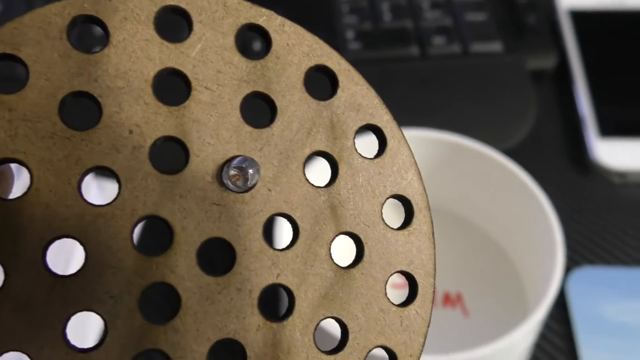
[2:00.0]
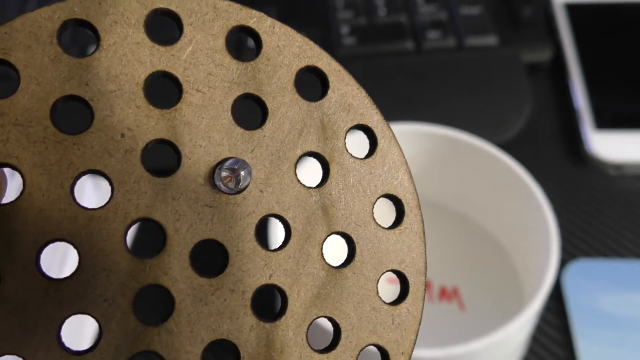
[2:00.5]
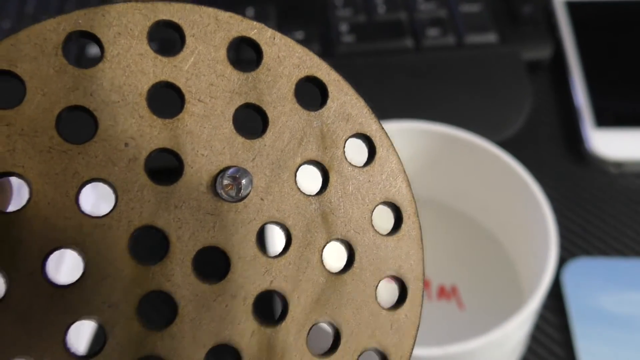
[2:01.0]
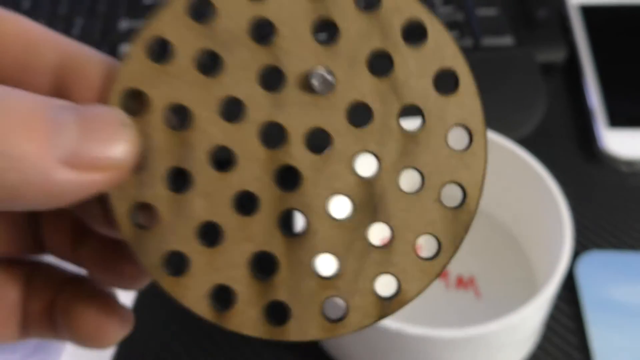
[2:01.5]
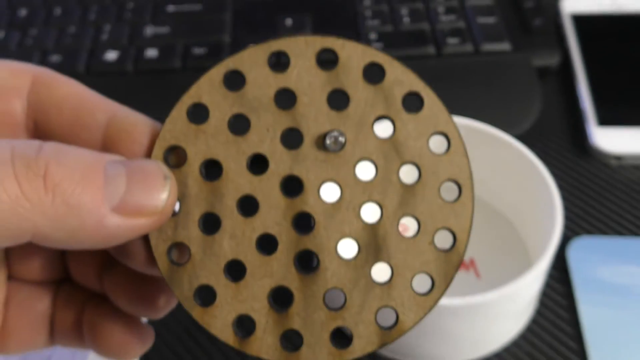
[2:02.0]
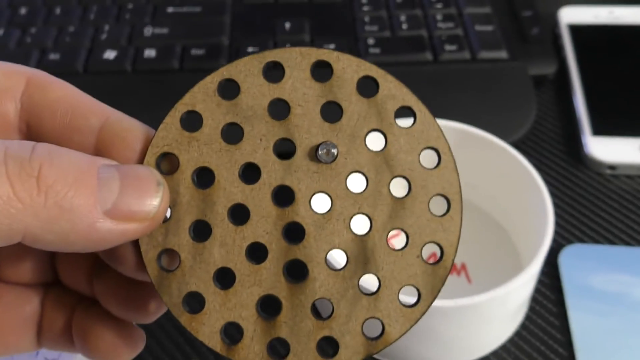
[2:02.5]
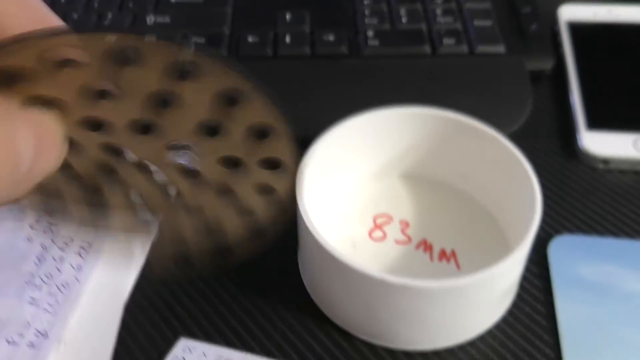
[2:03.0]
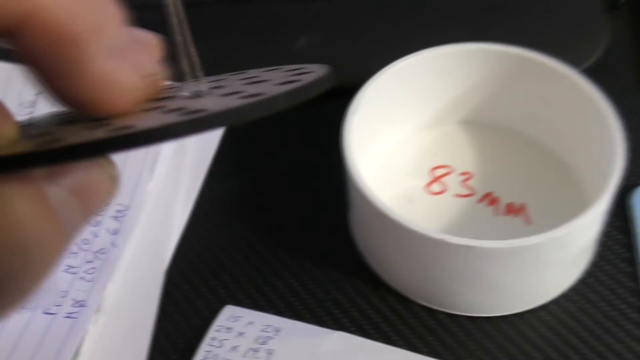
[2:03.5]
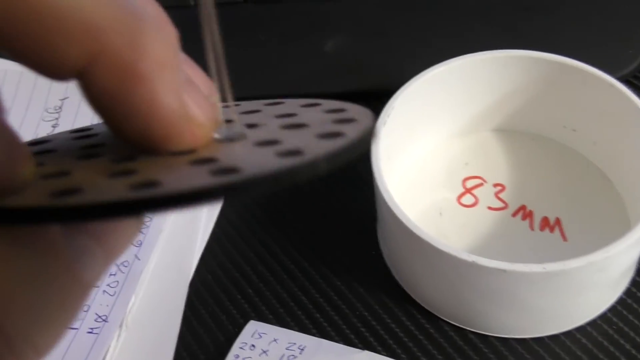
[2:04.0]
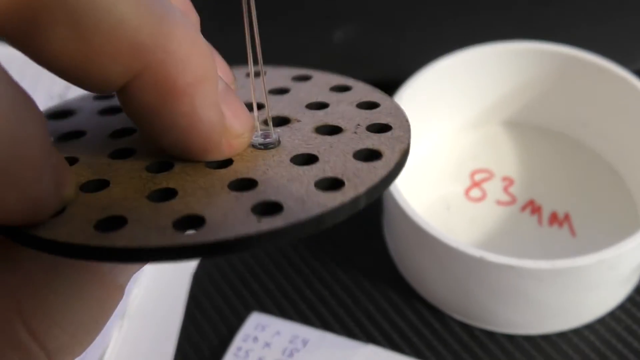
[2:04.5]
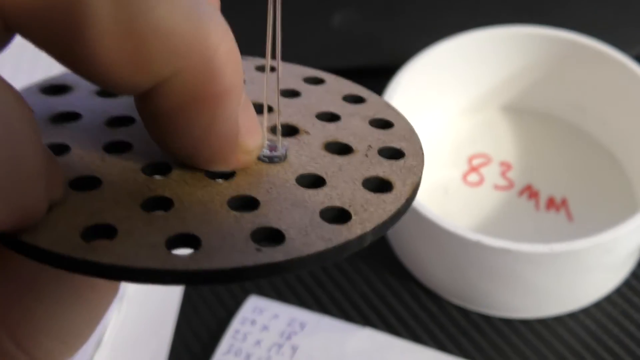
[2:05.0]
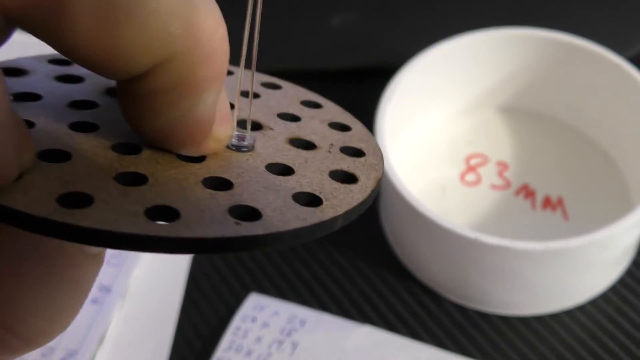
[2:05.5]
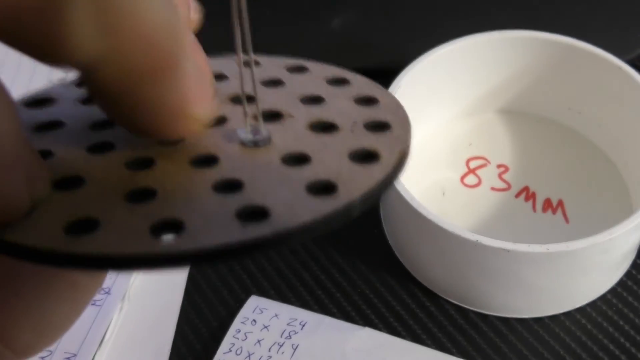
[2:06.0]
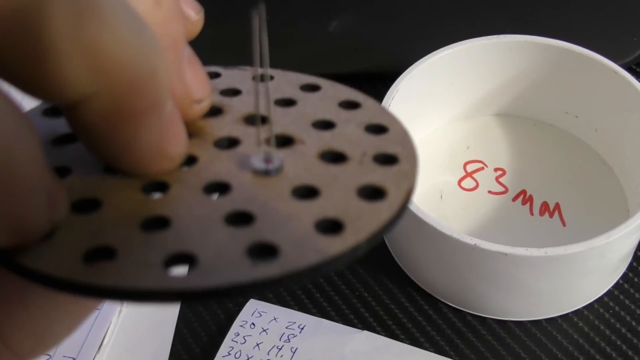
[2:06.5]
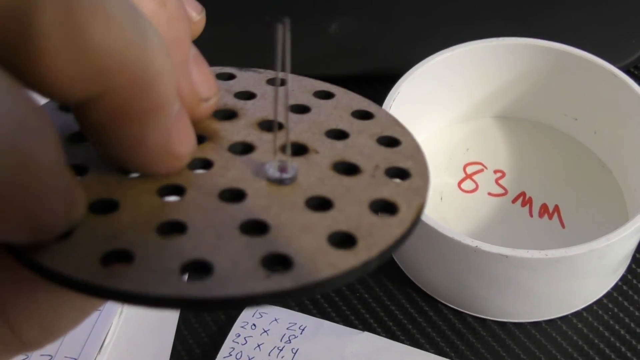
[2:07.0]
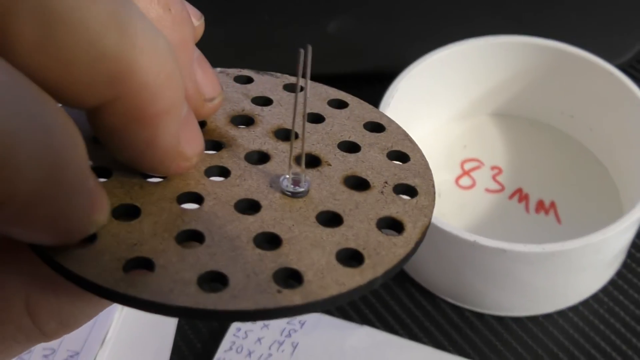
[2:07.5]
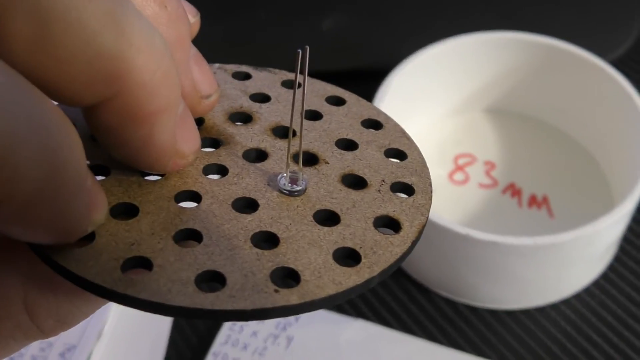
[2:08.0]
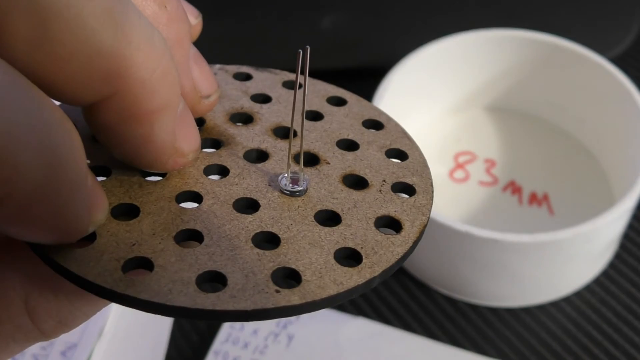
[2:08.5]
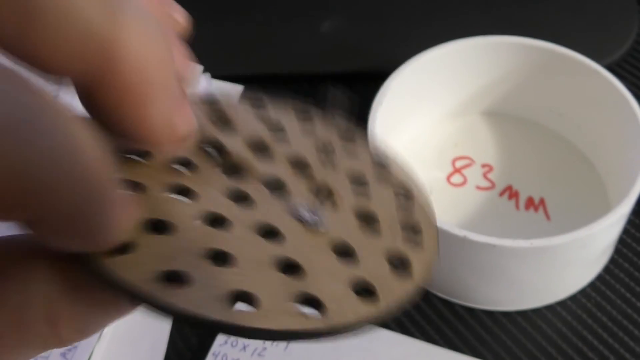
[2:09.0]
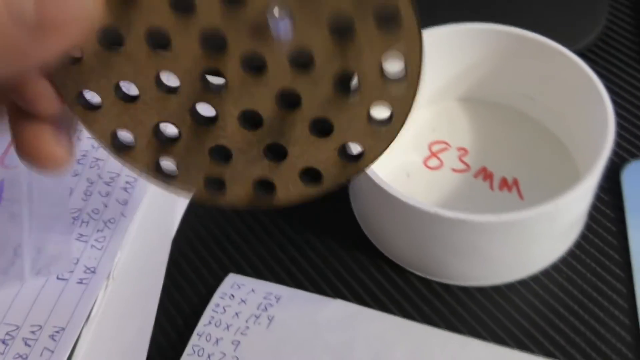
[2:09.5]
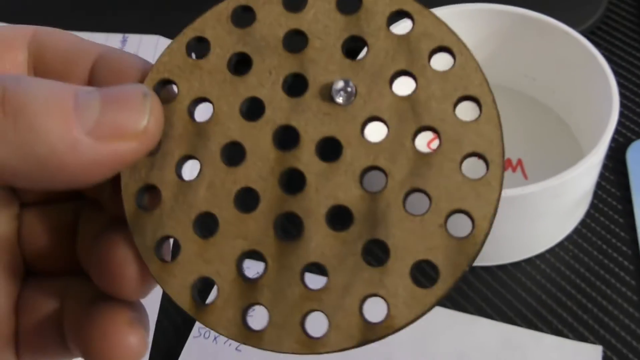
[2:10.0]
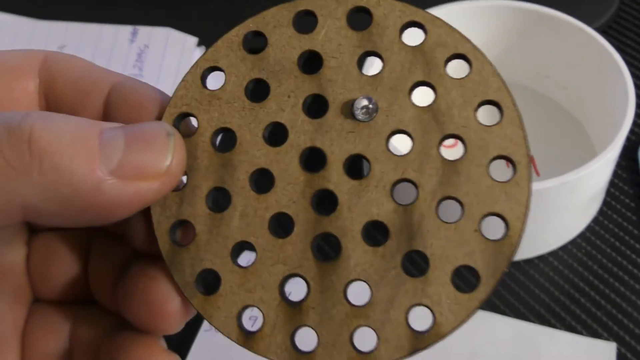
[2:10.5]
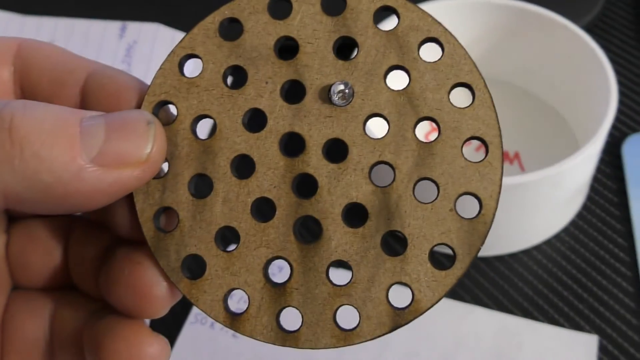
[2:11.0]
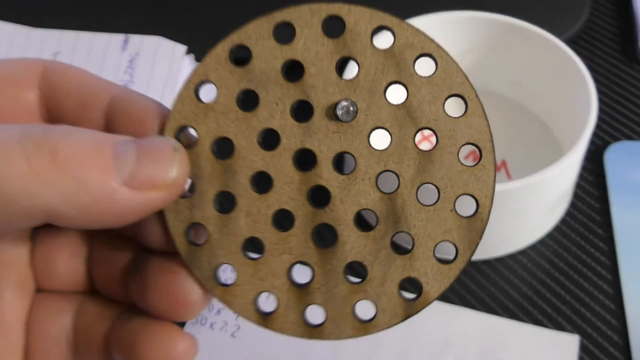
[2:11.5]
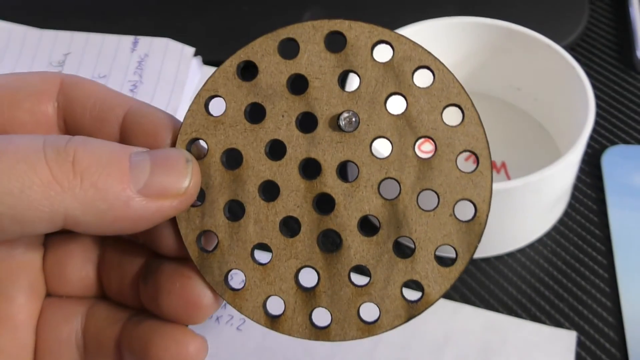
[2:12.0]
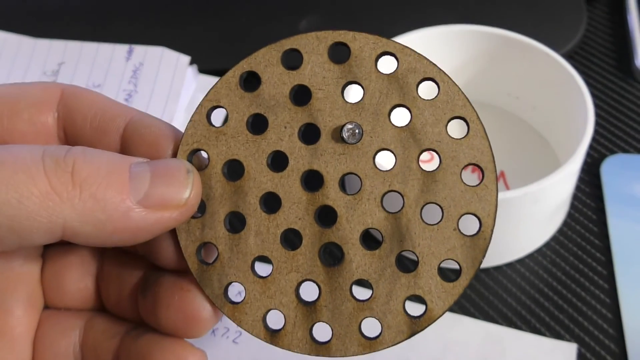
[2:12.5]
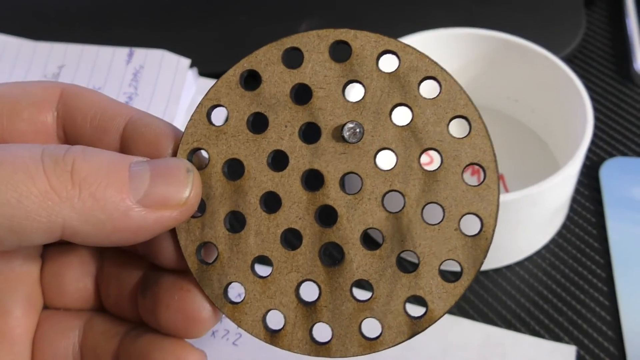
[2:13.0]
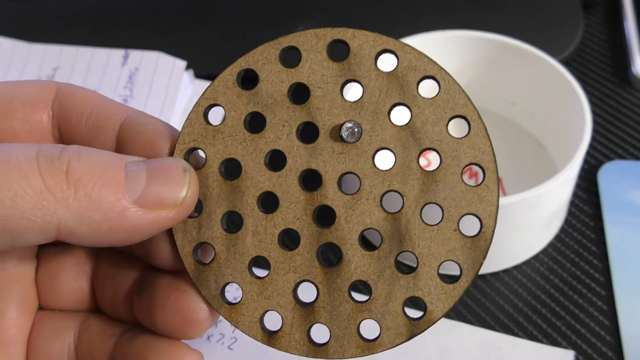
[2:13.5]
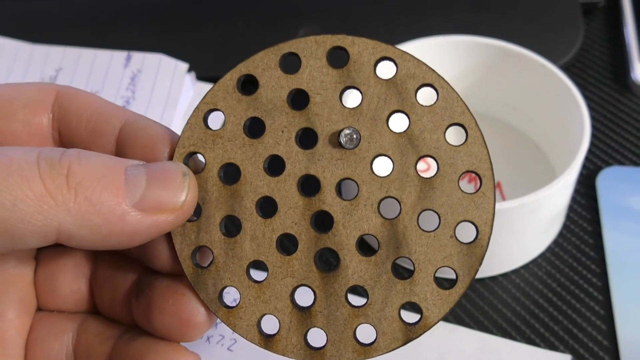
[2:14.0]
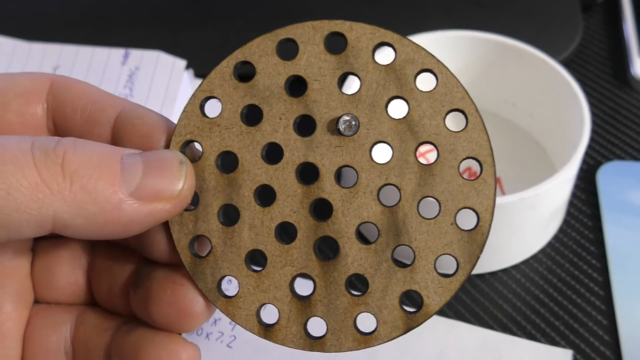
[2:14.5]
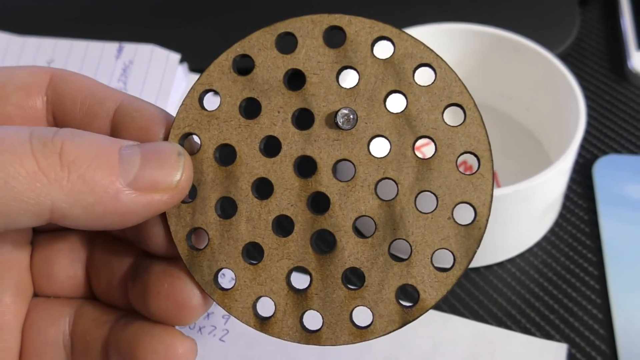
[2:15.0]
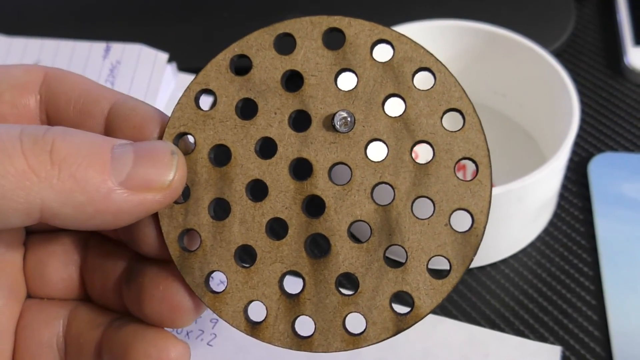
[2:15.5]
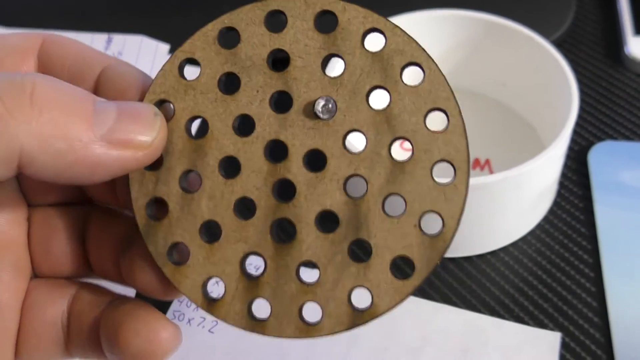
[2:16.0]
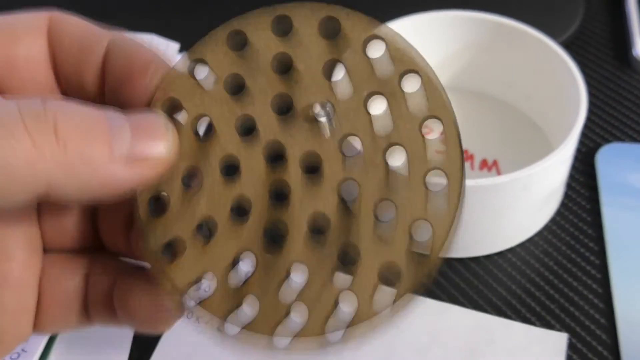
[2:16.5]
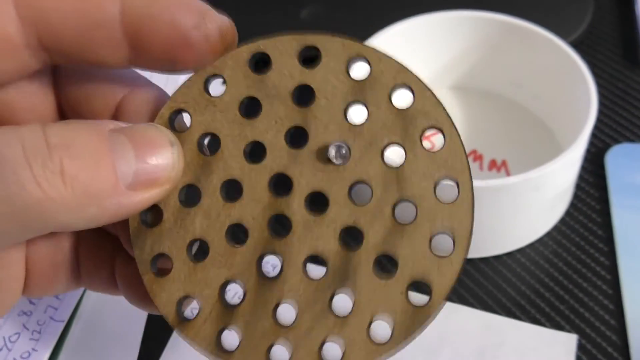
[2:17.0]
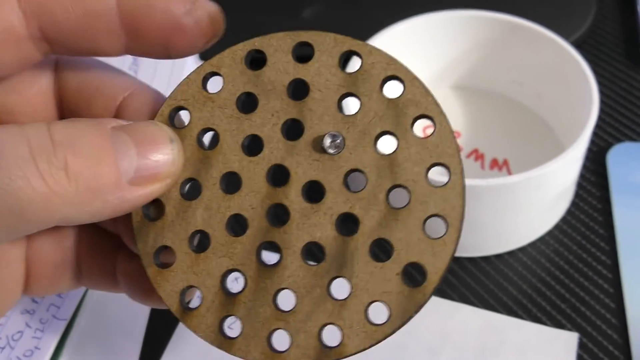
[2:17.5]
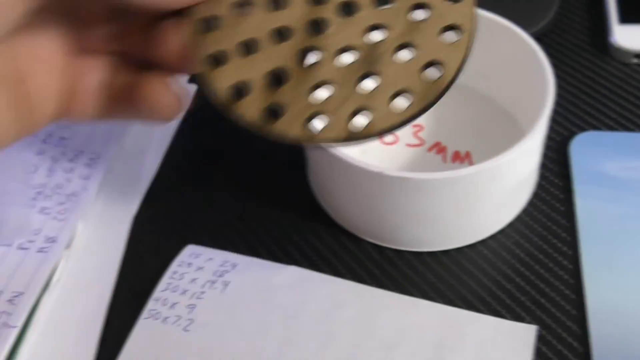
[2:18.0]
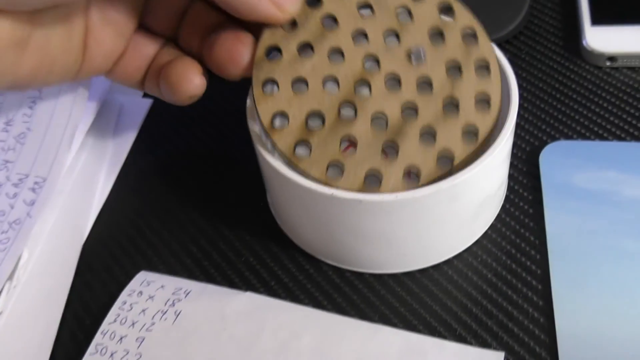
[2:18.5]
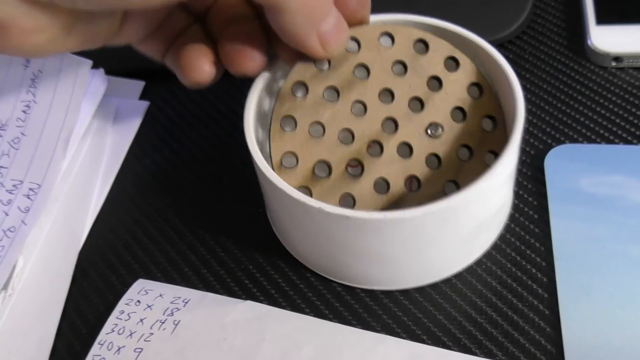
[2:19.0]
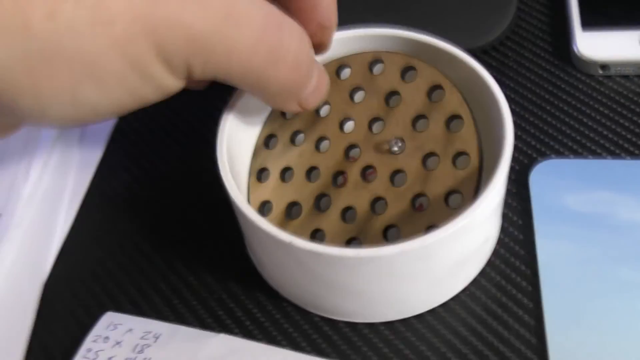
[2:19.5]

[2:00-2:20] The completed brown board with the small engraved circles is shown, and next to it there appears to be a small white tumbler marked inside with "65 millimeters". The user's hands touch the brown board, and he appears to have inserted a tiny light bulb into it; he takes the board with the light bulb and places it in the small tumbler marked 65 millimeters. In the background are a keyboard or laptop, some papers, and an iPhone next to the keyboard.